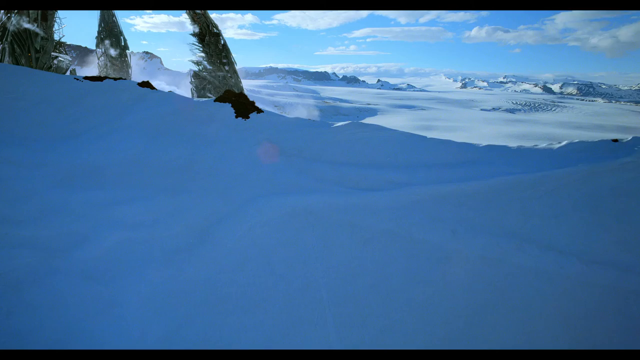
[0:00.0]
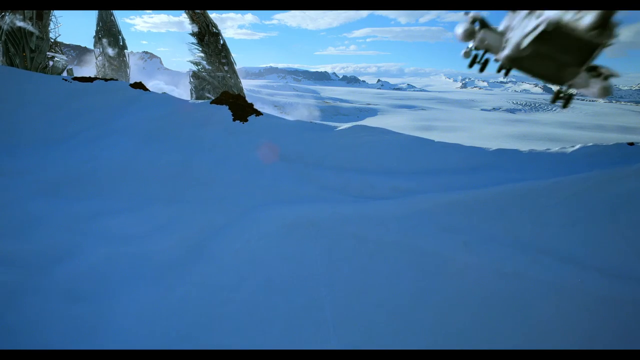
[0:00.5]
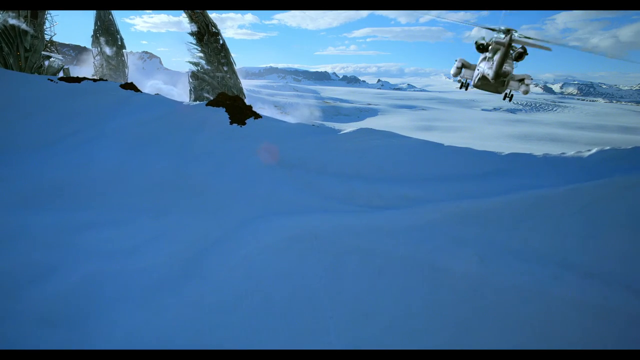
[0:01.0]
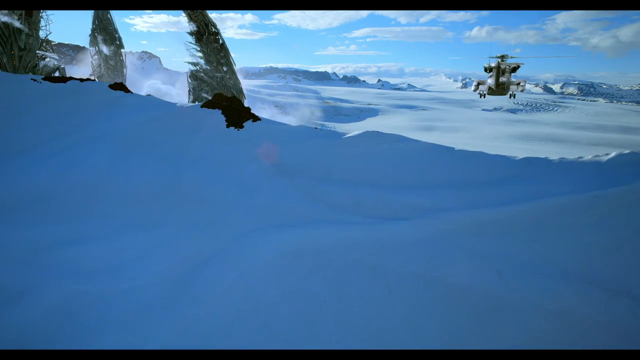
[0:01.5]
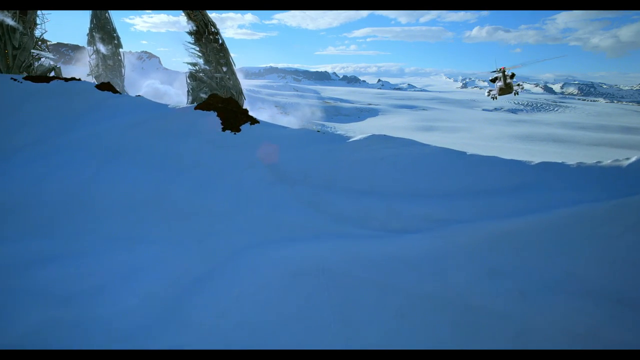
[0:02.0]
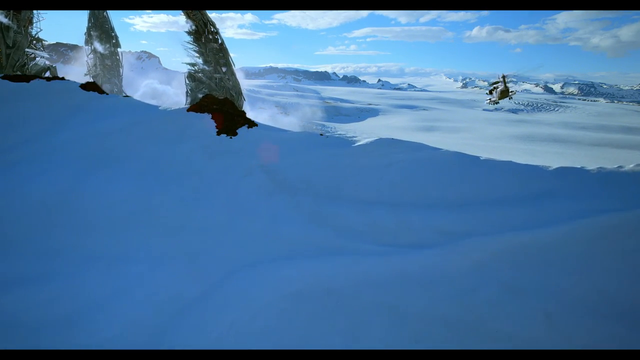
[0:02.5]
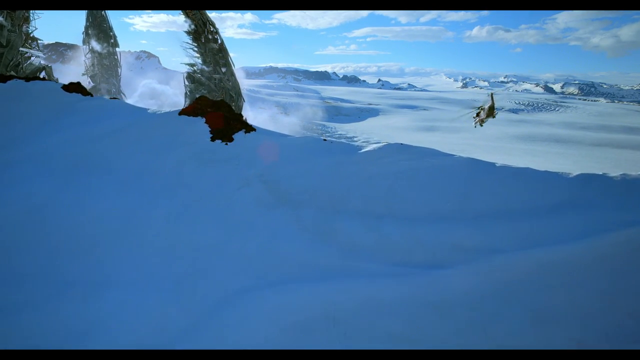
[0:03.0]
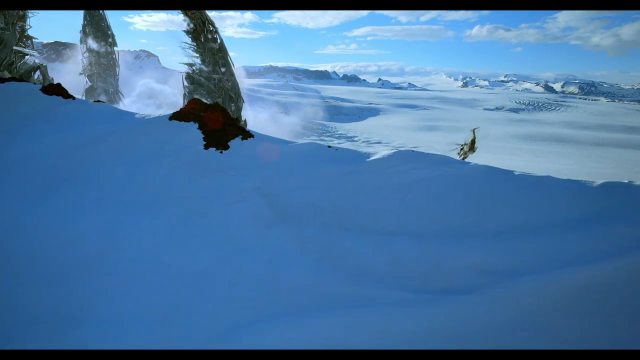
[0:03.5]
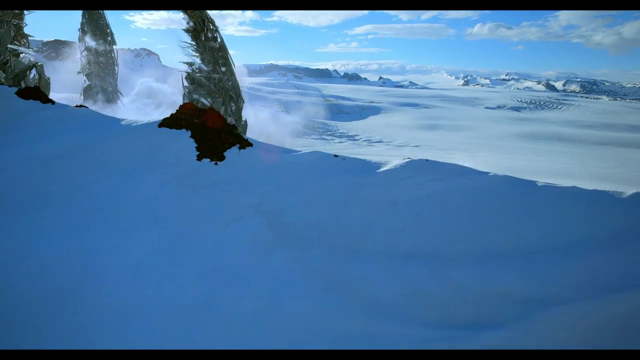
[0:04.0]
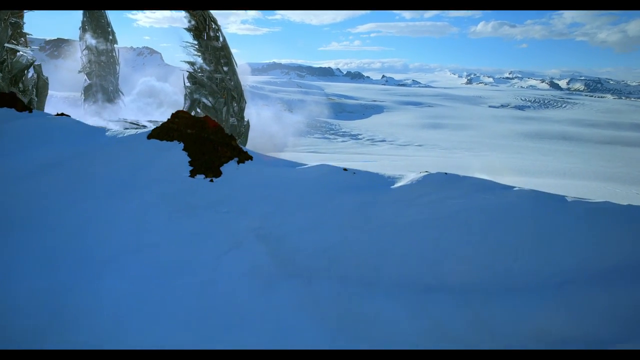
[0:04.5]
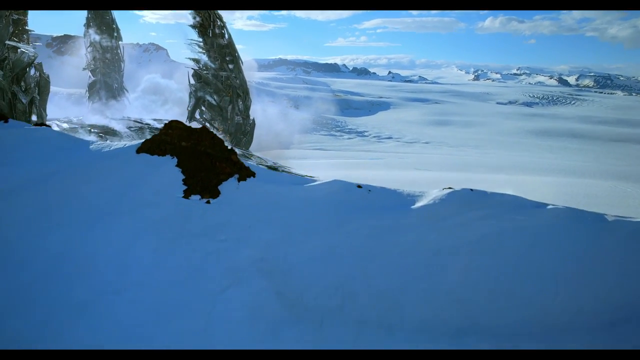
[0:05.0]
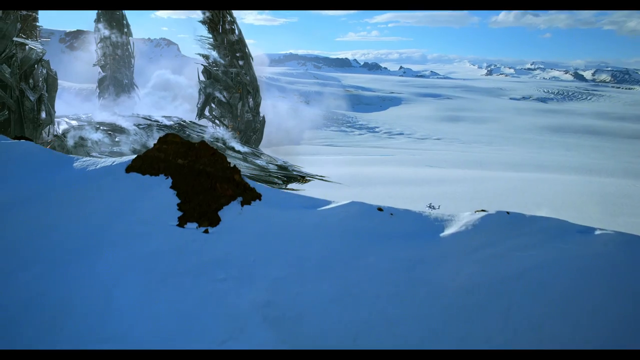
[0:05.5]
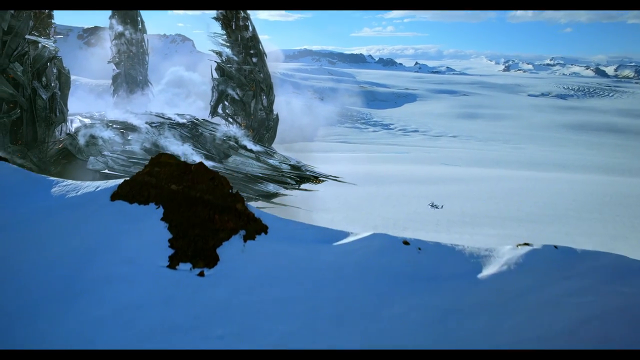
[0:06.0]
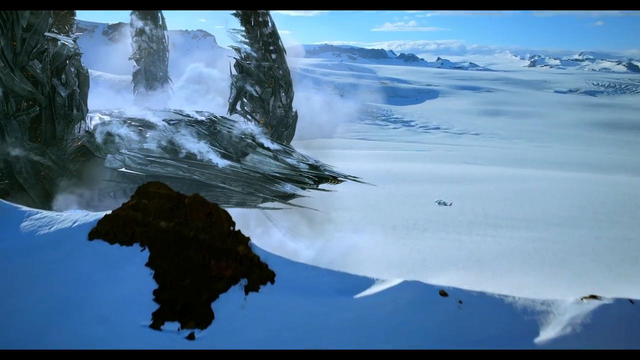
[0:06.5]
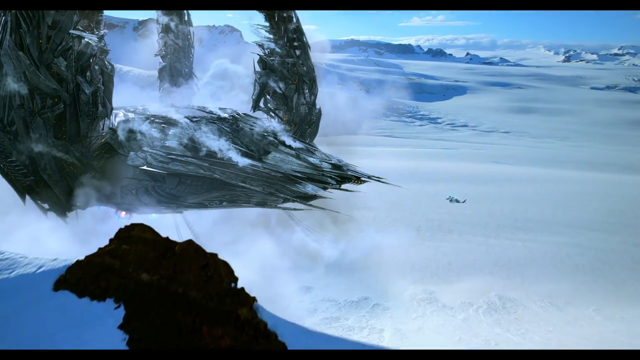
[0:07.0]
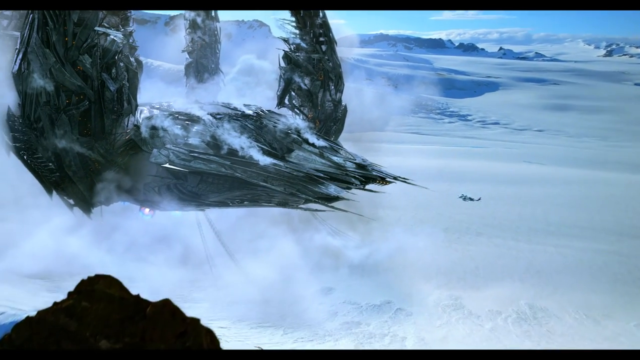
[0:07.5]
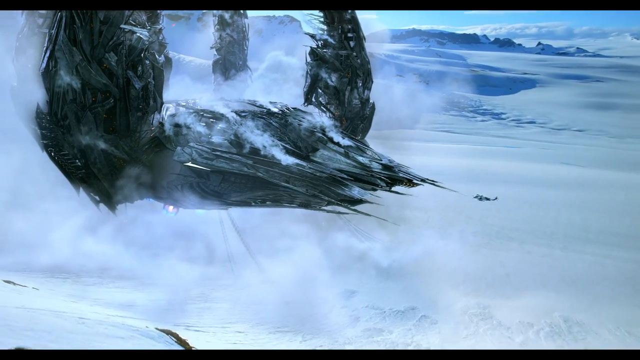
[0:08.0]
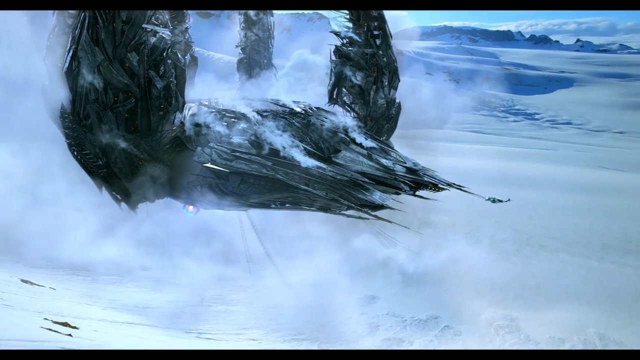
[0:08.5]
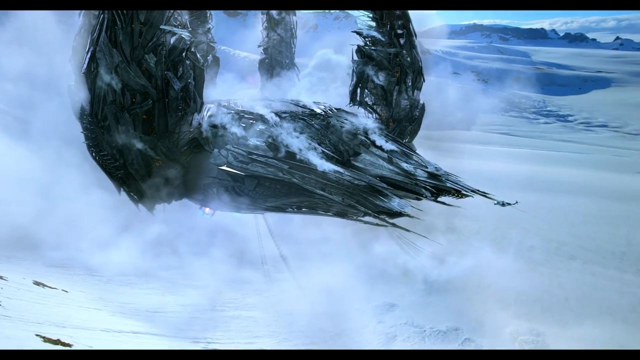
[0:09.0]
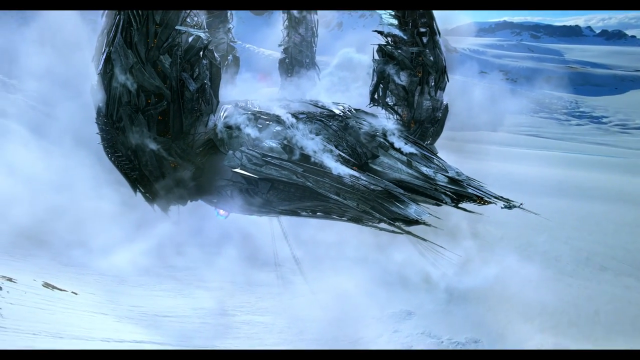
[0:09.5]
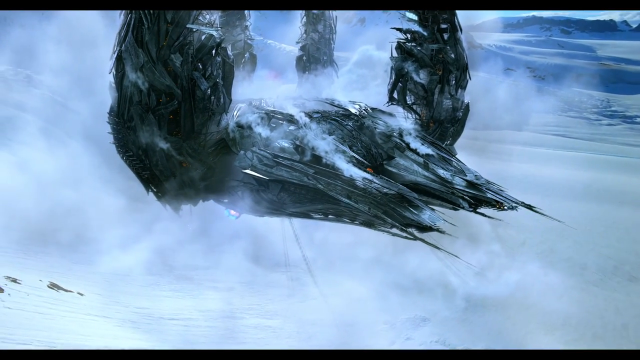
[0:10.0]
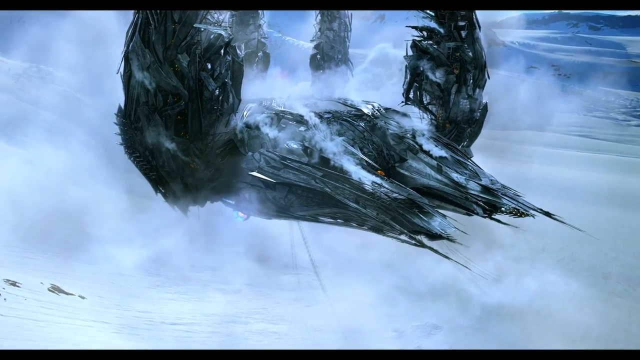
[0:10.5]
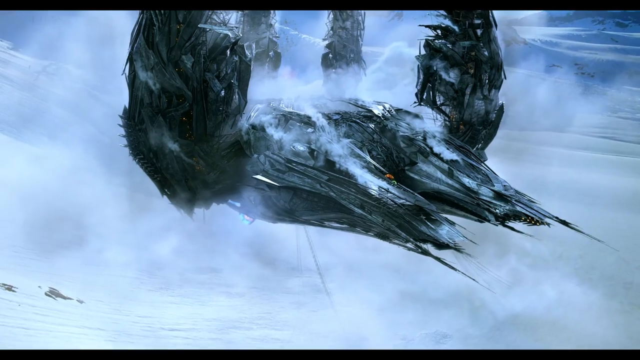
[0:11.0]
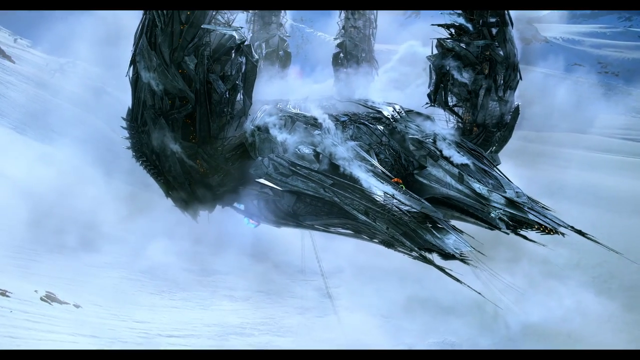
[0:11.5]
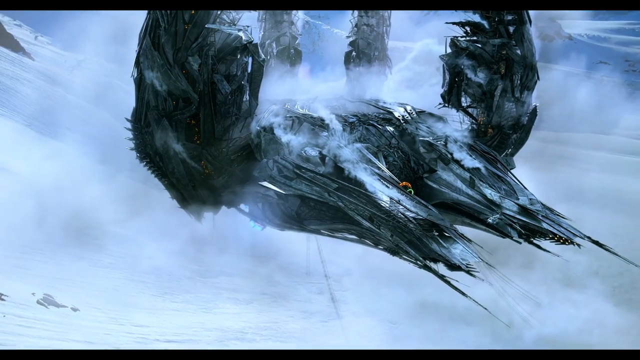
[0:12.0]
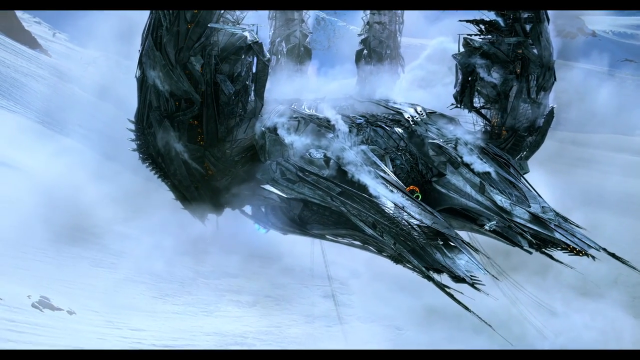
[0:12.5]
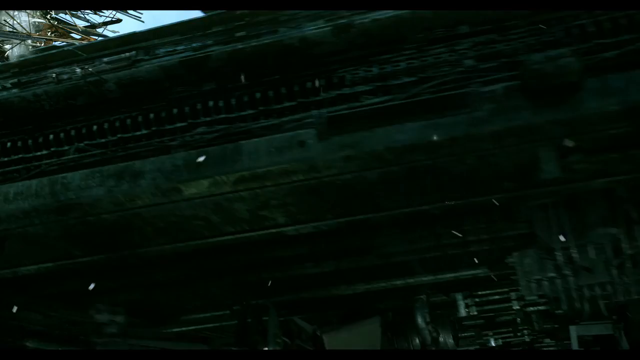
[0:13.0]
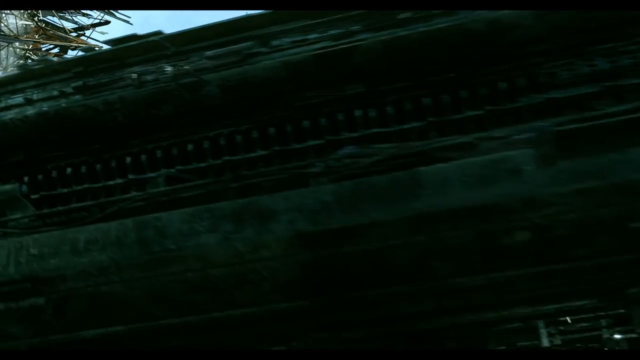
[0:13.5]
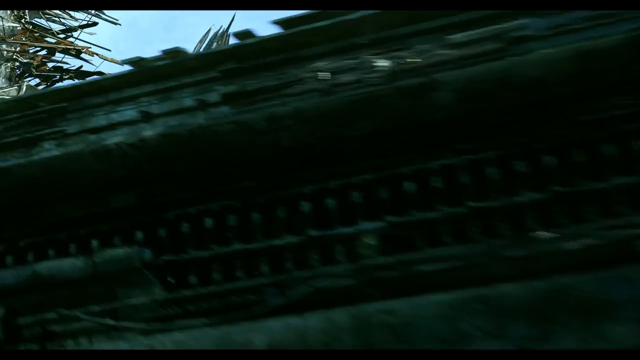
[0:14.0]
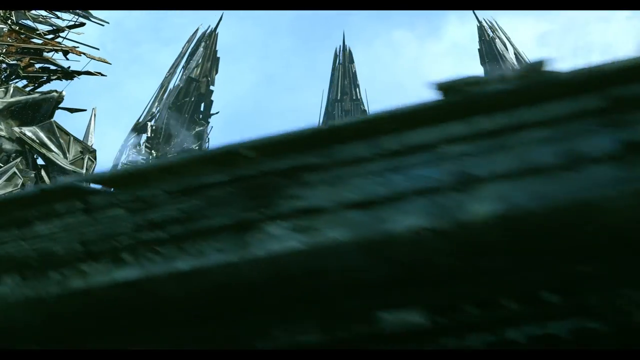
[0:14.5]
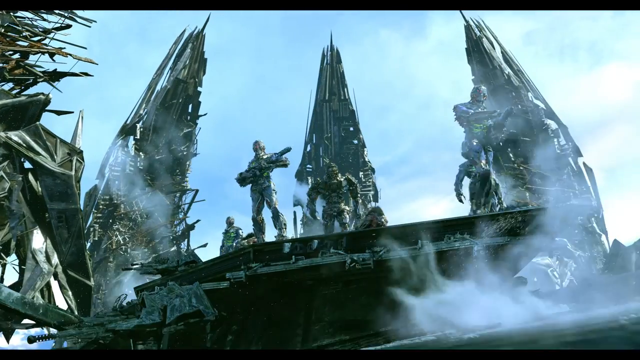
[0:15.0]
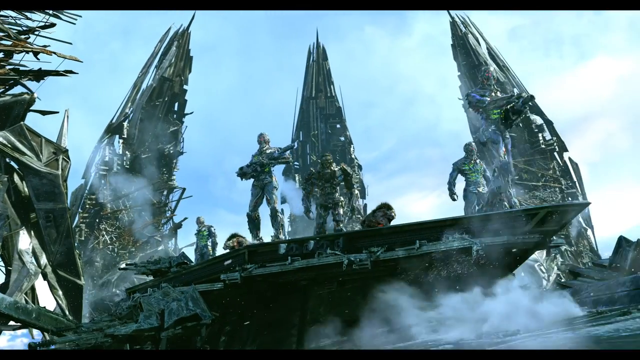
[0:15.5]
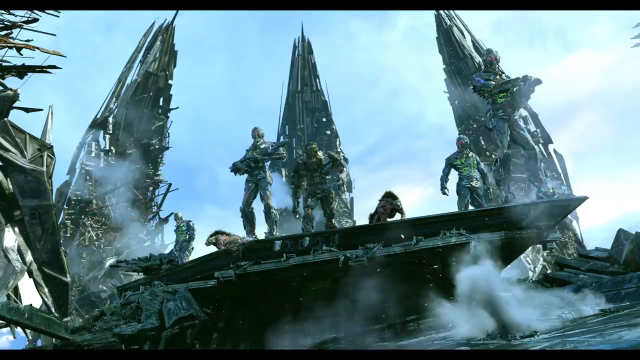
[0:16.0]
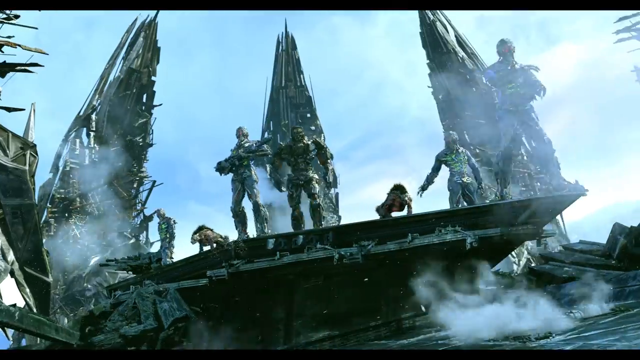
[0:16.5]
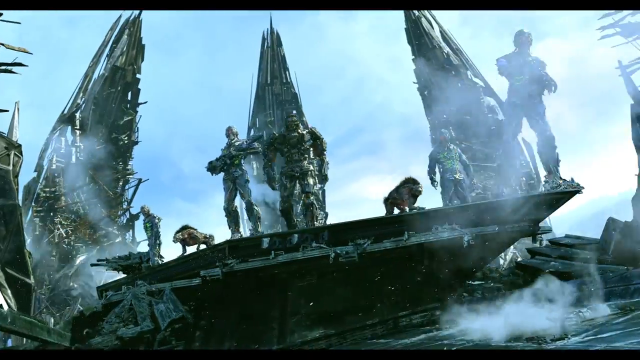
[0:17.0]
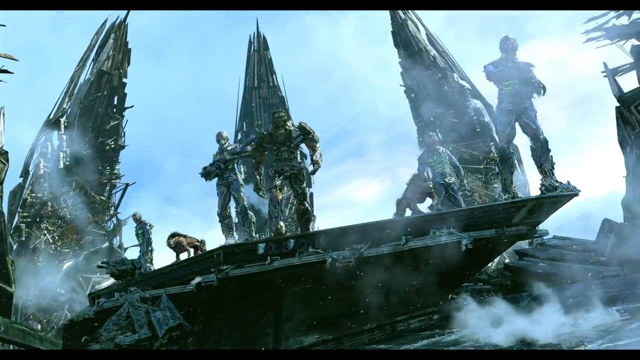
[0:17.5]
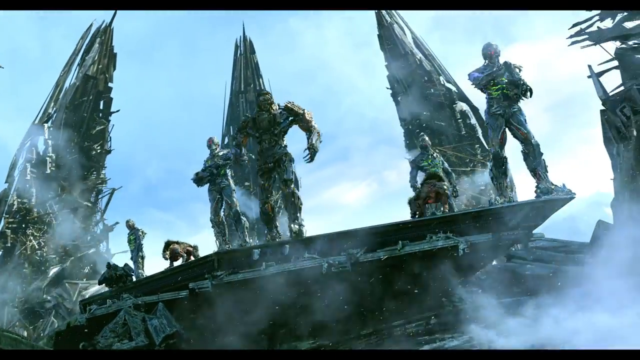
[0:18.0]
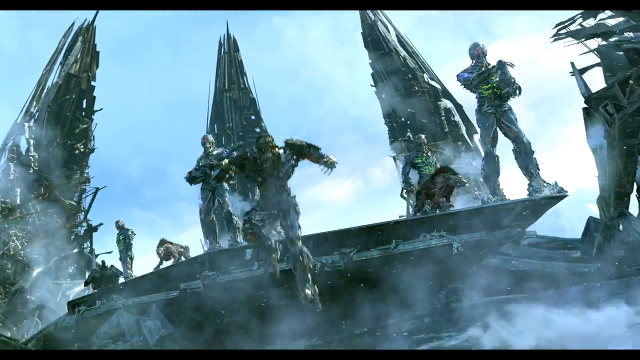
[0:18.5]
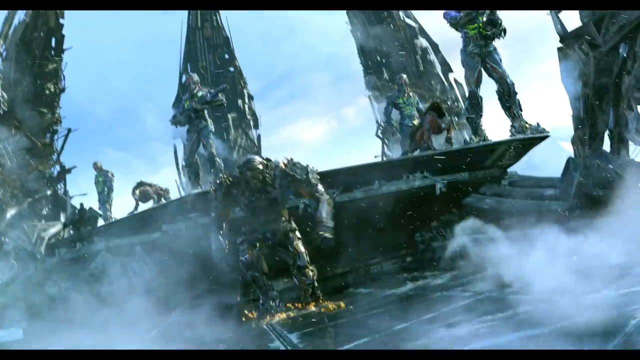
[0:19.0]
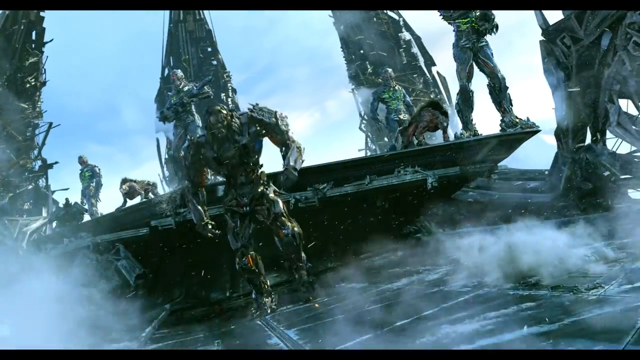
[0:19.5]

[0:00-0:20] A snowy terrain with mountains and flatland is entirely covered with snow. A helicopter moves in from the right side of the frame toward an area where a gigantic spaceship has probably landed. The spaceship is black and covered in snow, and it looks like it has crashed into the land. Its front is pointy, and two antenna-type things go up on either side of its body. The helicopter heads toward the spaceship. Smoke comes out of the spaceship, suggesting it has crash-landed, and a lot of damage to it is visible. Robots holding machine guns come out of the spaceship with mythical-looking animals that look like hyenas but have hair growing from the head to the back of the neck. One main robot moves around the spaceship and walks toward the front.